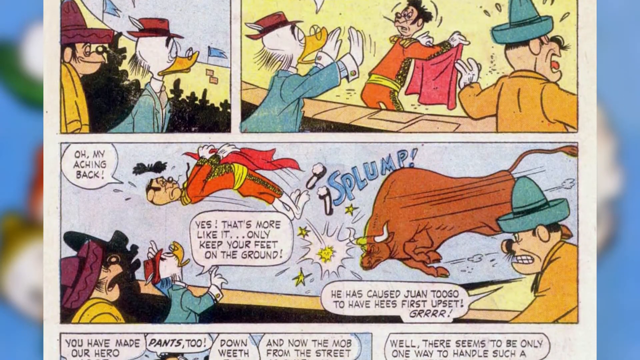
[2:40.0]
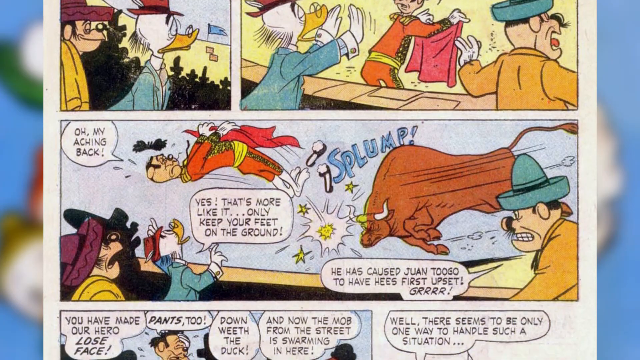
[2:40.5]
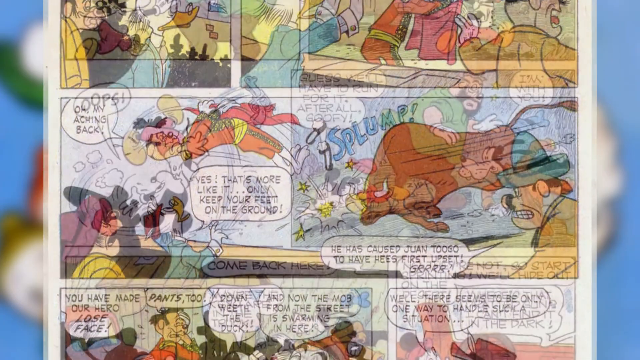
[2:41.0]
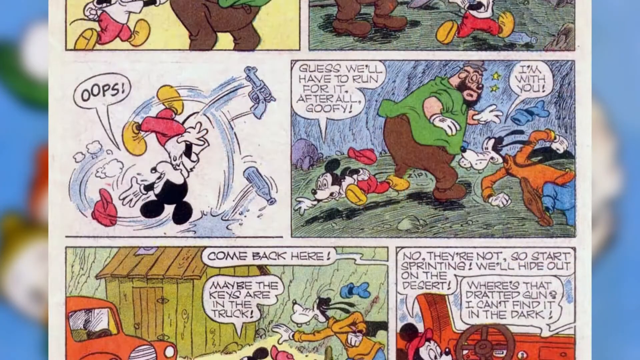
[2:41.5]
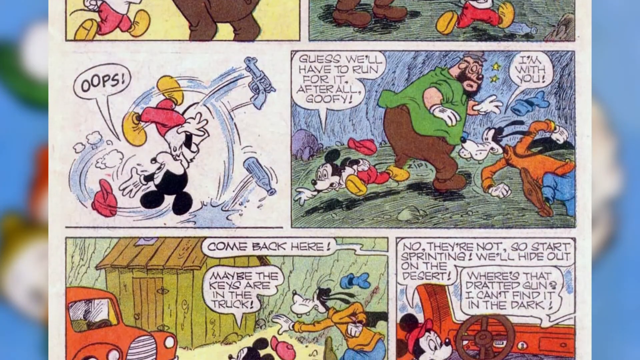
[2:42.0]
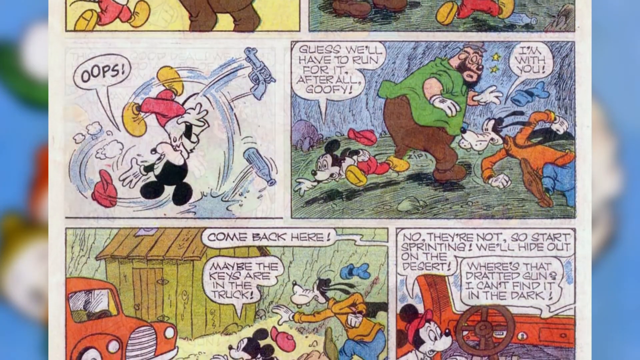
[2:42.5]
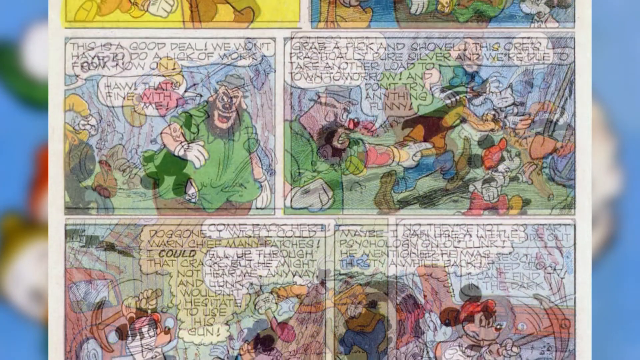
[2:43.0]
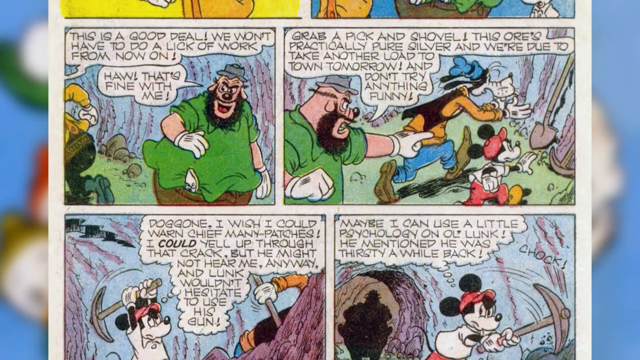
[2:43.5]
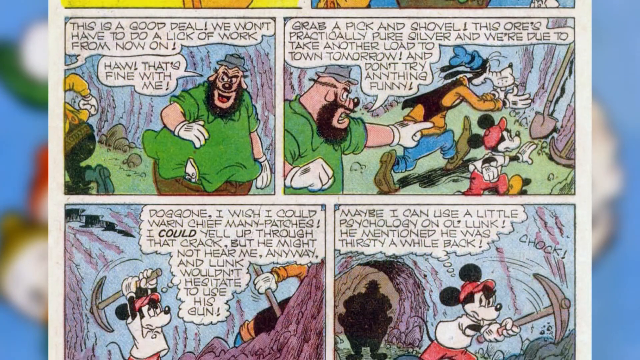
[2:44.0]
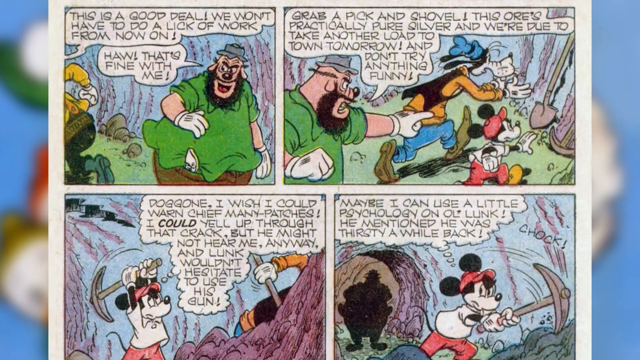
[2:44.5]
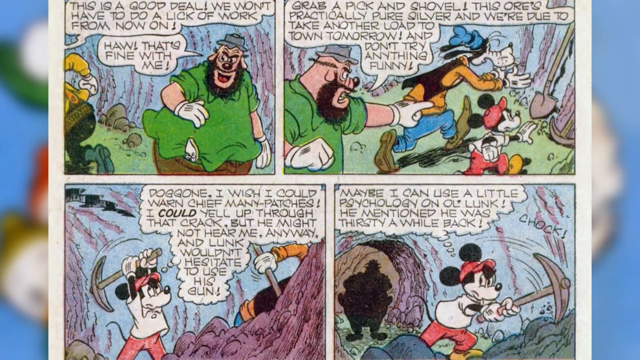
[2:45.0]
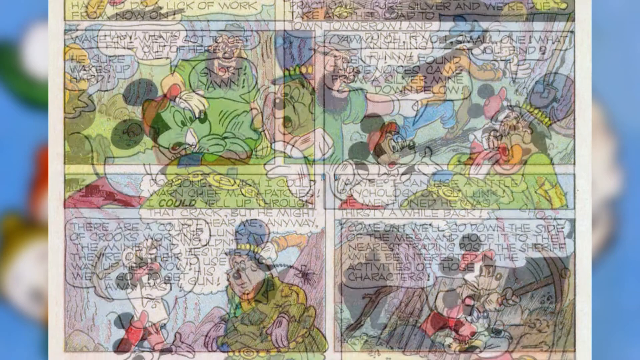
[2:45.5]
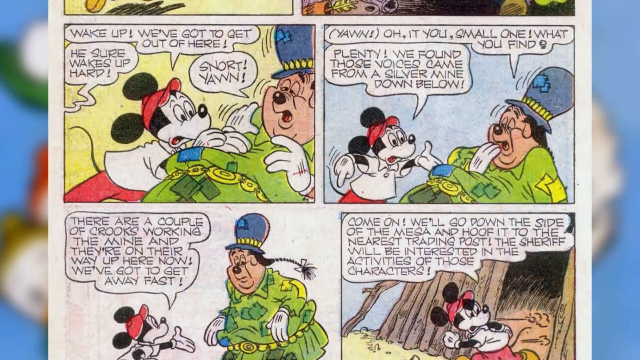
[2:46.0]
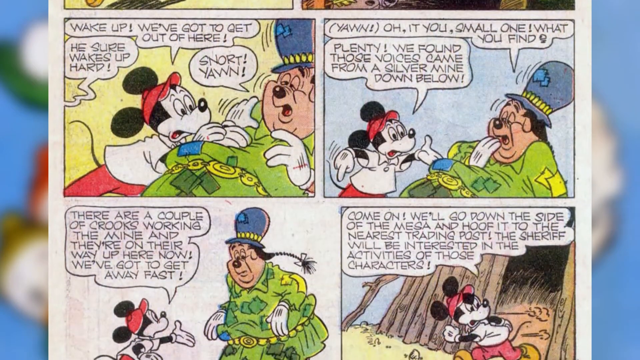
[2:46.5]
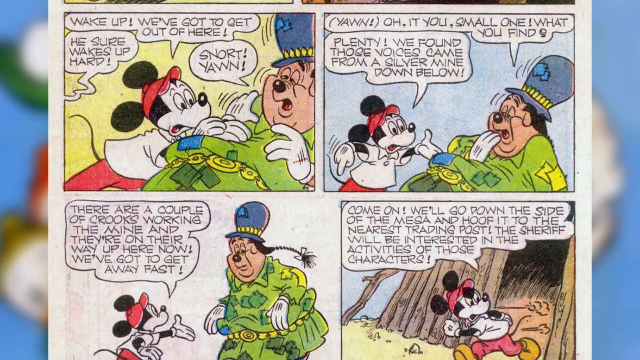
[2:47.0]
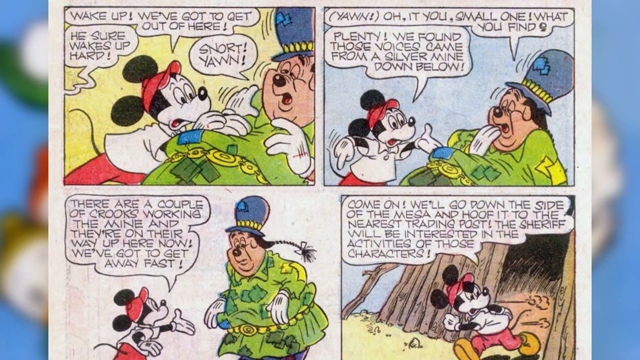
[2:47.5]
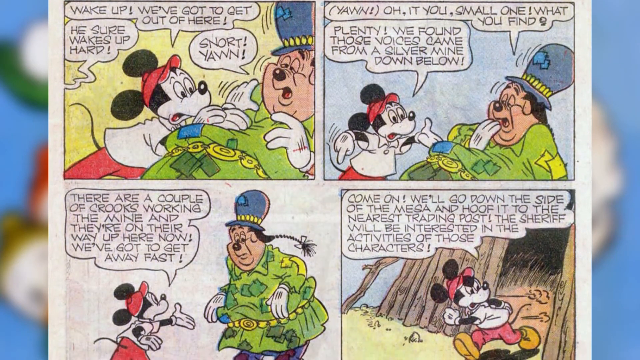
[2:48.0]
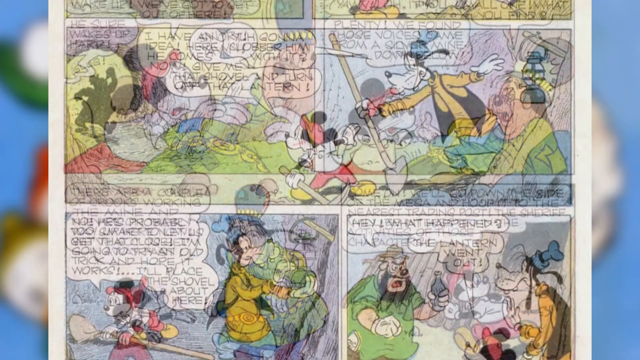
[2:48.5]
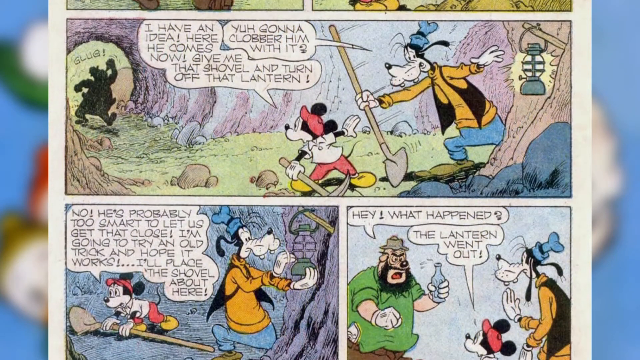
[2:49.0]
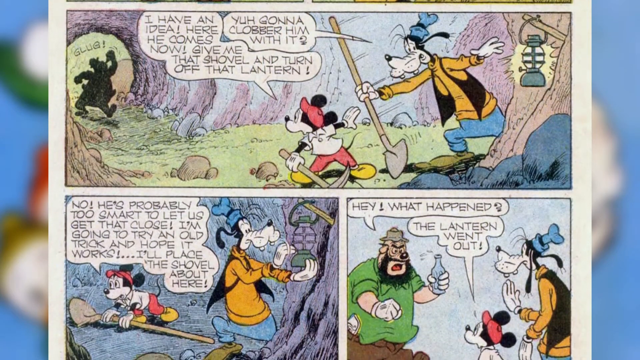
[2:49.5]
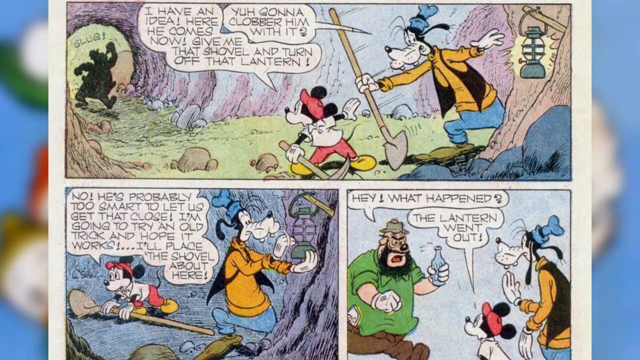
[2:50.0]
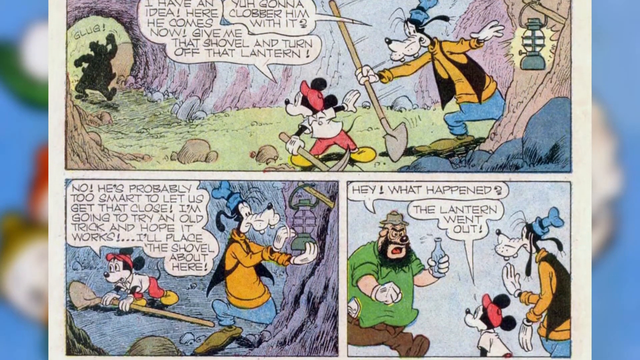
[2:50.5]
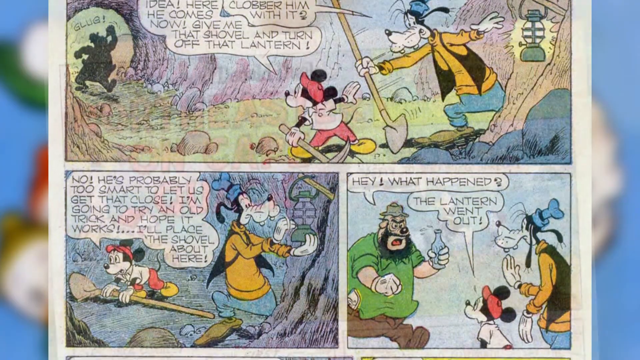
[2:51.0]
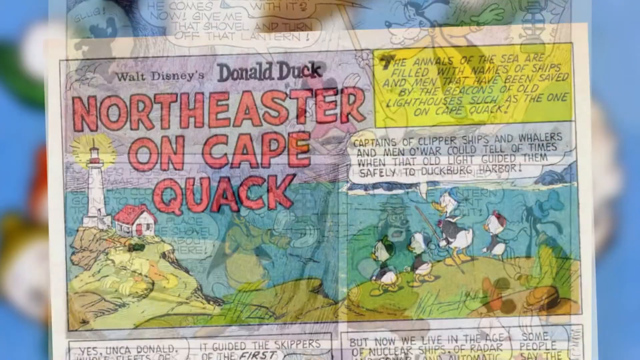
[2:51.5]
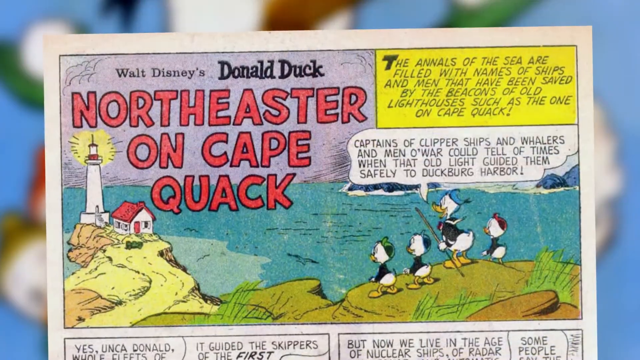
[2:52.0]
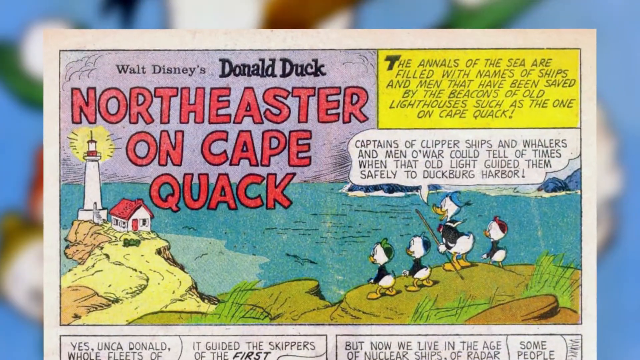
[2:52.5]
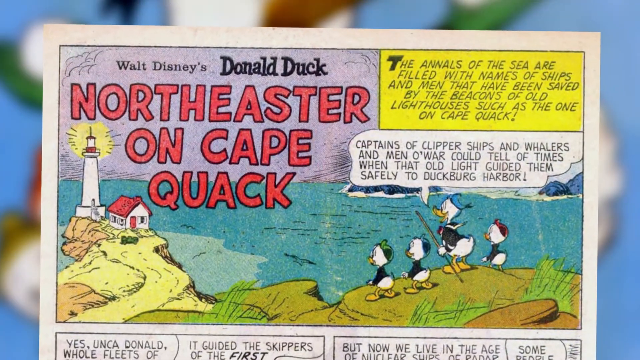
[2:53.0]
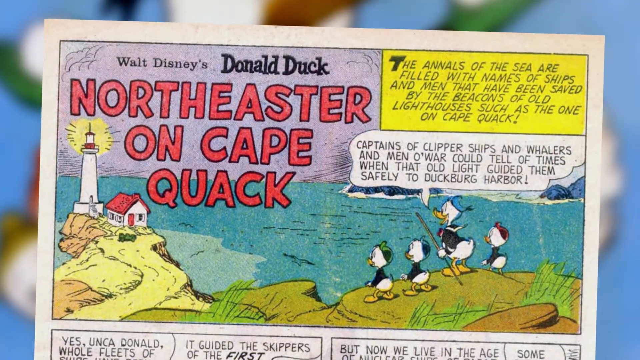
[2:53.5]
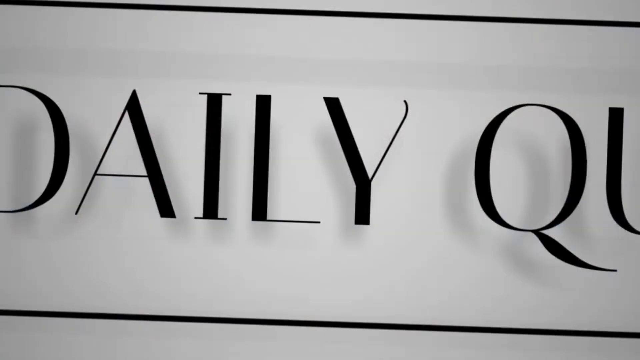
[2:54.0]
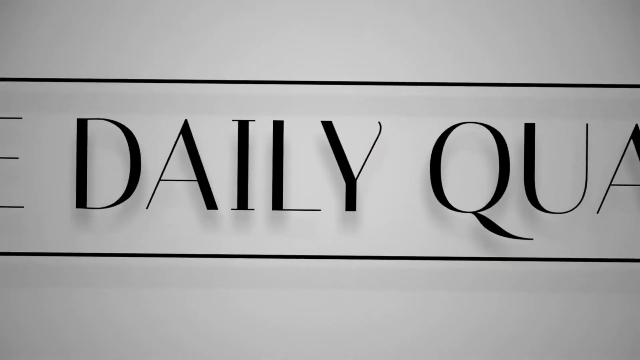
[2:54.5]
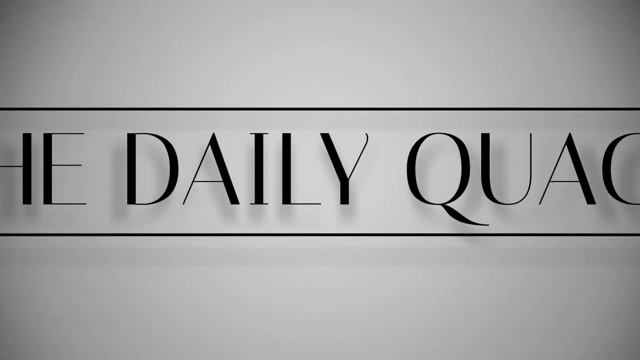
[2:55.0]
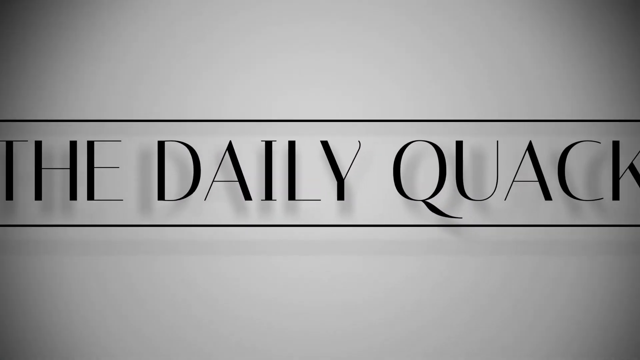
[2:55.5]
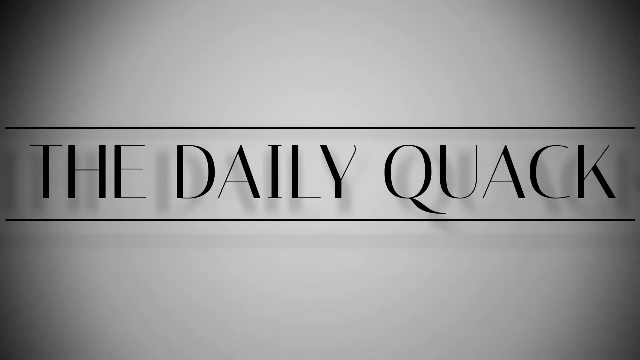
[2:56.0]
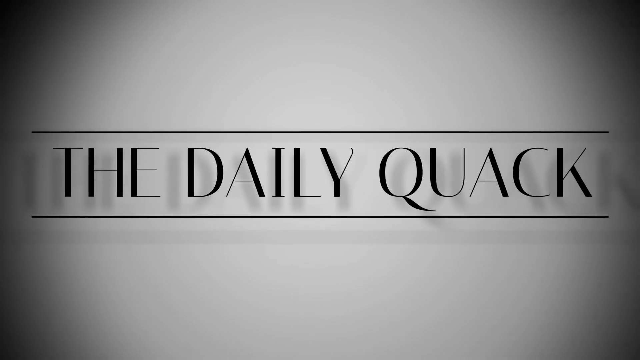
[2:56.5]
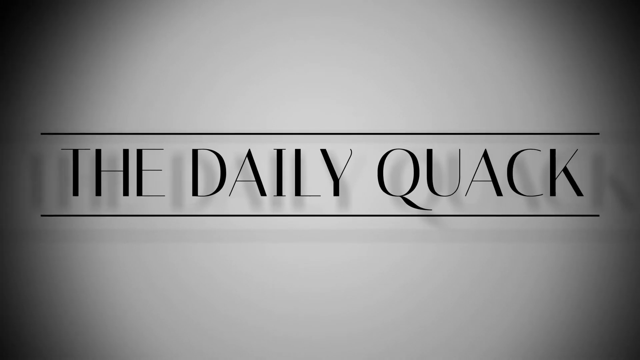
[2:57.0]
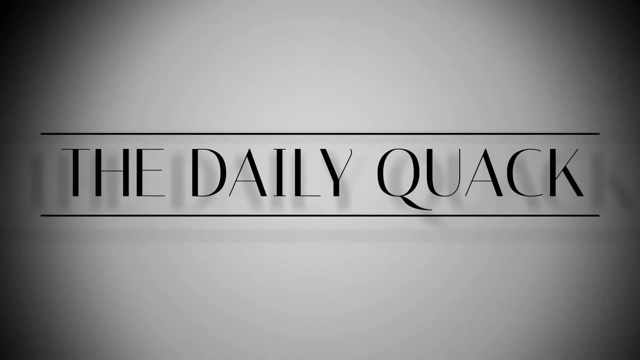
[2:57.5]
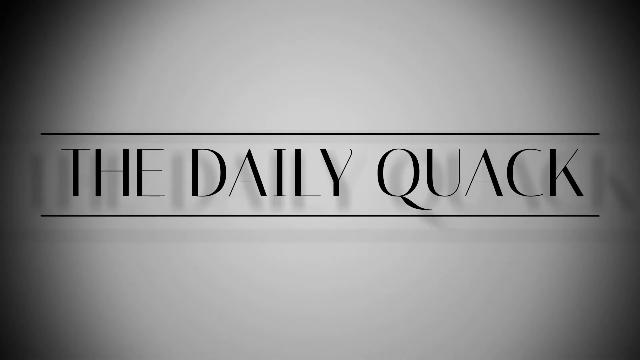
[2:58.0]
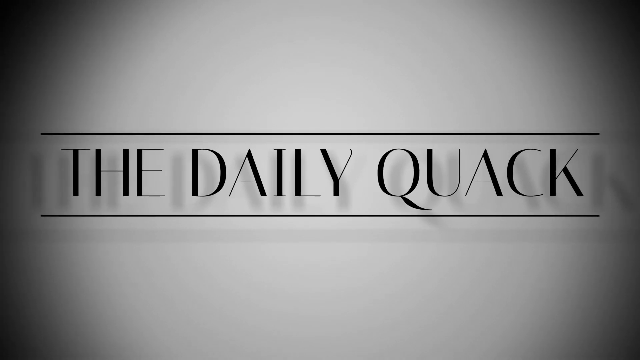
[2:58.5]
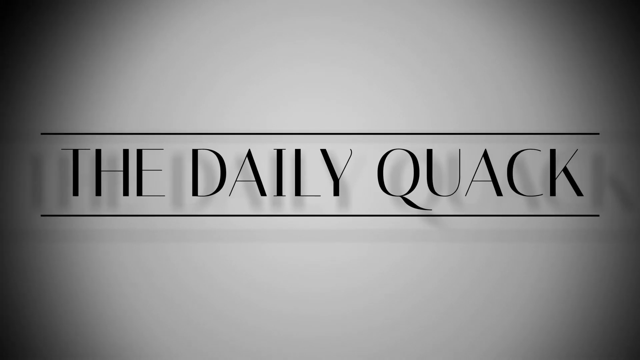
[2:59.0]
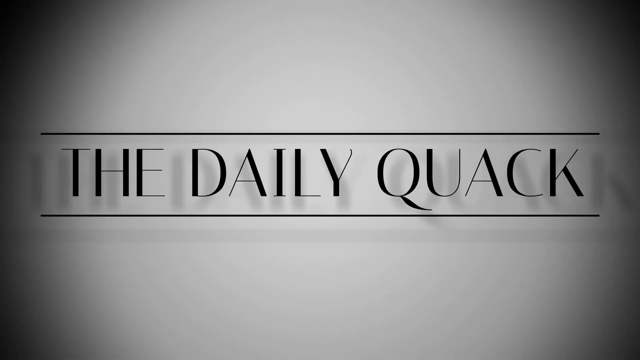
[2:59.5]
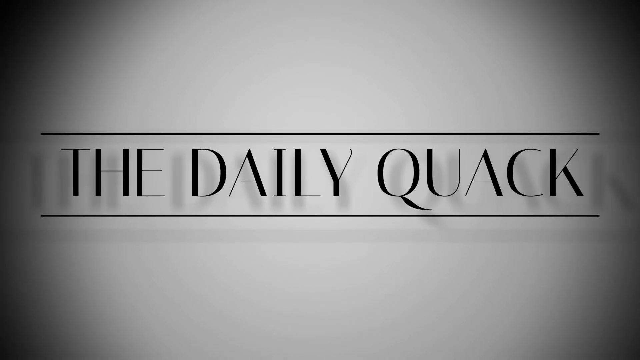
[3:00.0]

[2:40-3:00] A comic strip shows a duck at a matador show where the matador is wrangling a bull; the bull kind of hits the matador with a big splump, sending the matador flying over the audience while holding the red cape. Another comic strip features Mickey Mouse, Goofy the dog and some other characters, who seem to be on some type of mystery journey looking for silver in a mountainside of the mesa; they try to stop a bad character and come up with a plan to turn off some of the lanterns, obstructing his view. Then another comic strip about Donald Duck called Northeaster on Cape Quack shows Donald Duck and three little ducks trying to save a lighthouse. A title screen at the end of the video suggests all of these comics are featured from the Daily Quack.